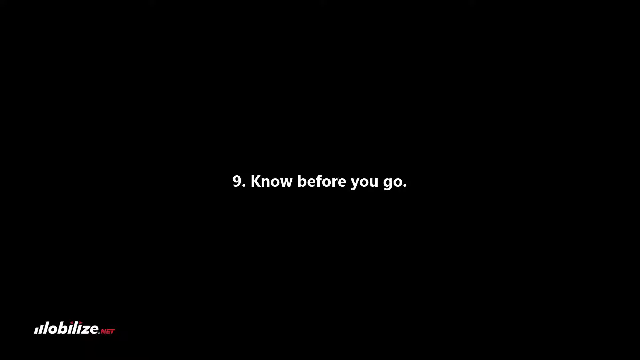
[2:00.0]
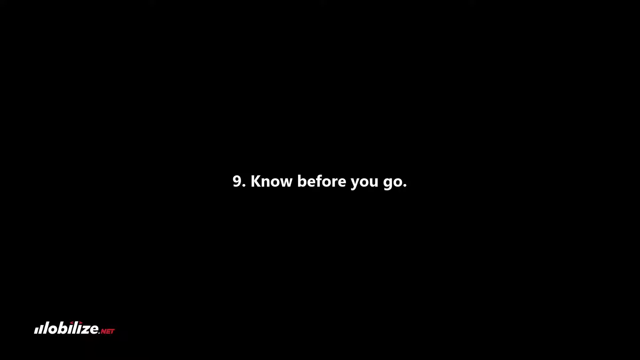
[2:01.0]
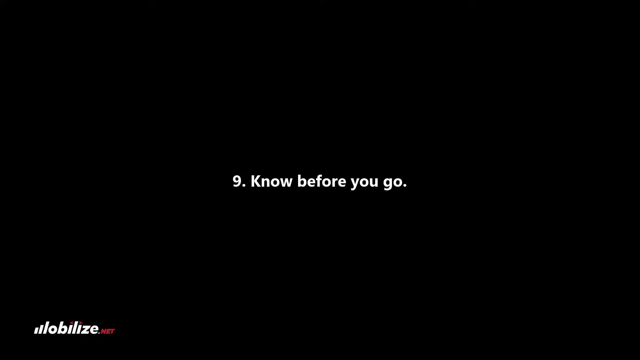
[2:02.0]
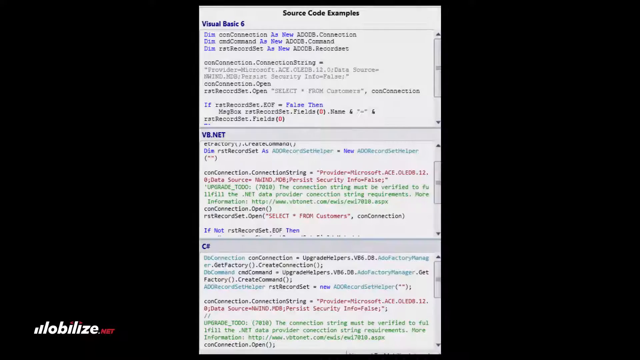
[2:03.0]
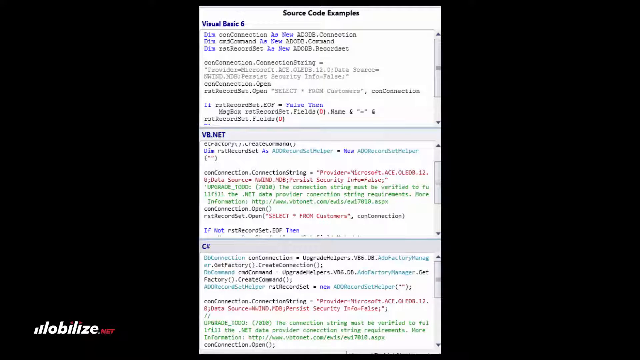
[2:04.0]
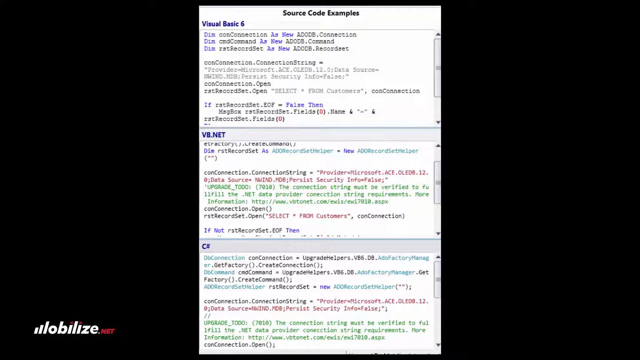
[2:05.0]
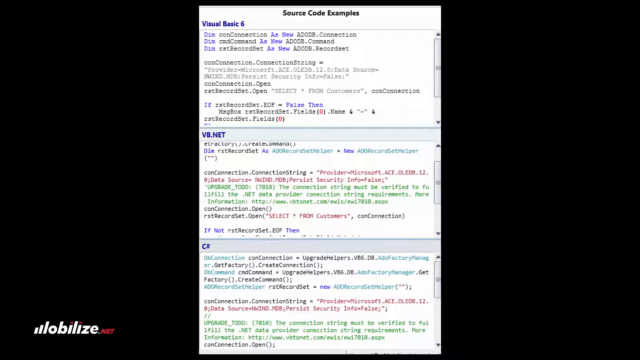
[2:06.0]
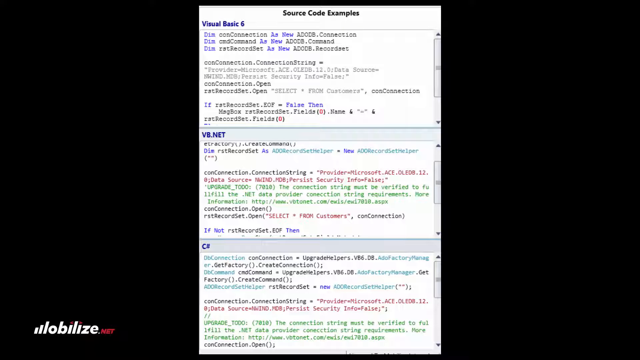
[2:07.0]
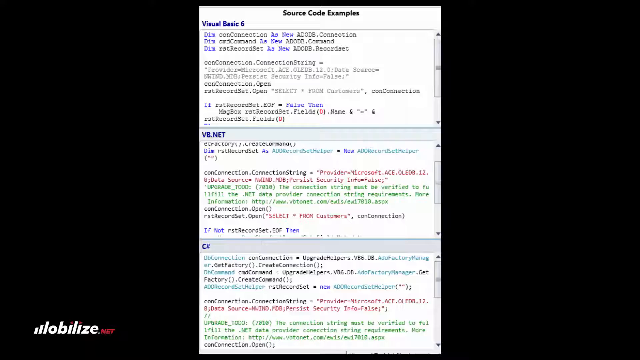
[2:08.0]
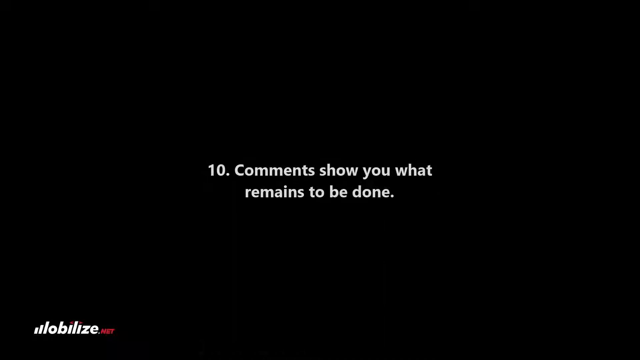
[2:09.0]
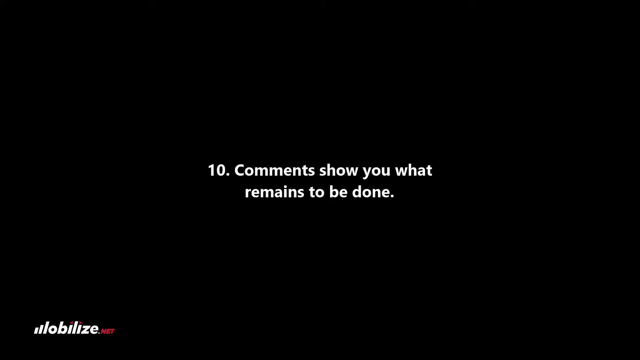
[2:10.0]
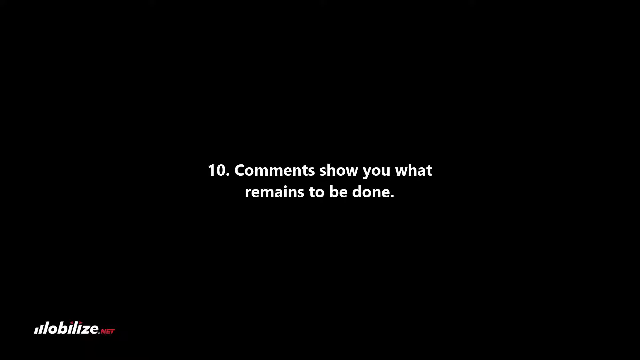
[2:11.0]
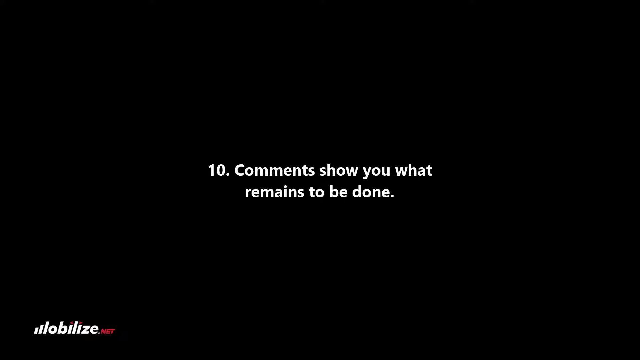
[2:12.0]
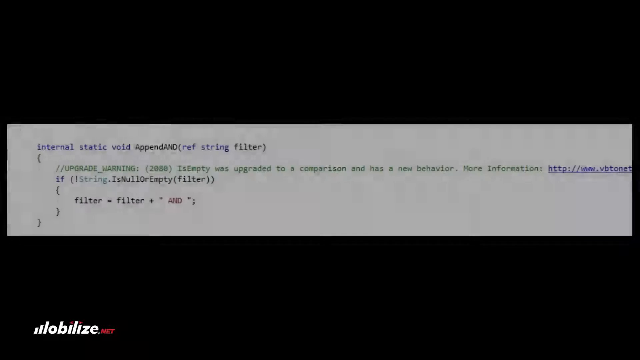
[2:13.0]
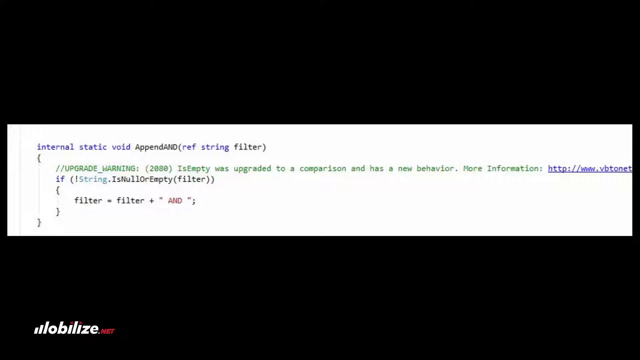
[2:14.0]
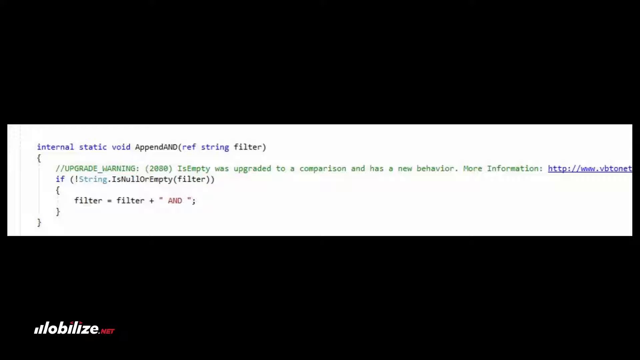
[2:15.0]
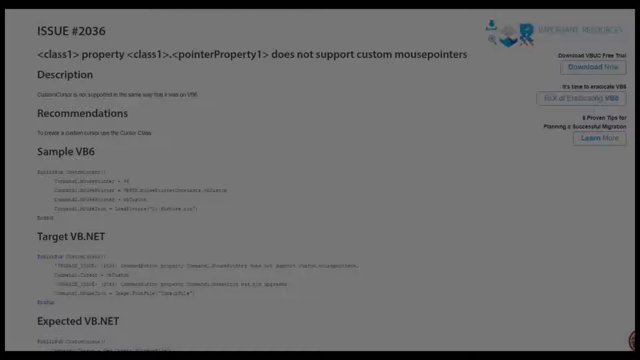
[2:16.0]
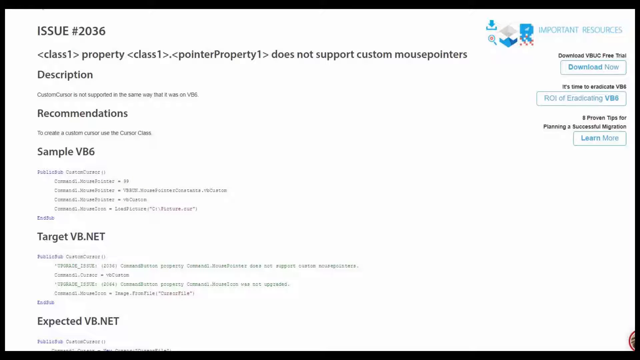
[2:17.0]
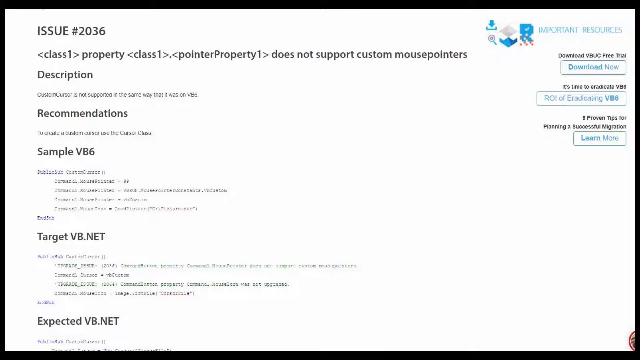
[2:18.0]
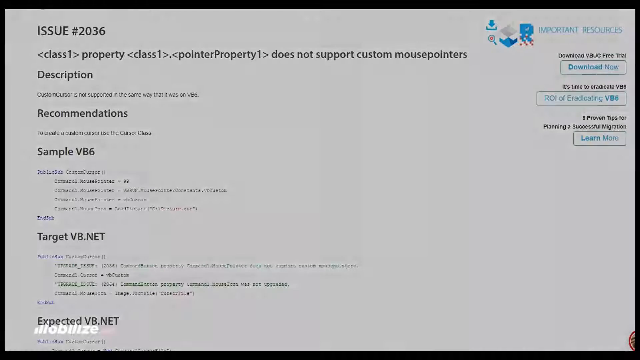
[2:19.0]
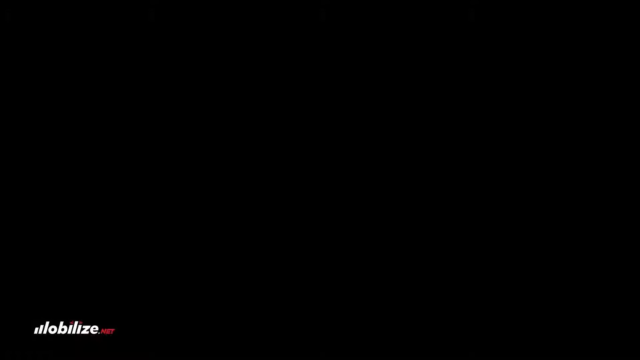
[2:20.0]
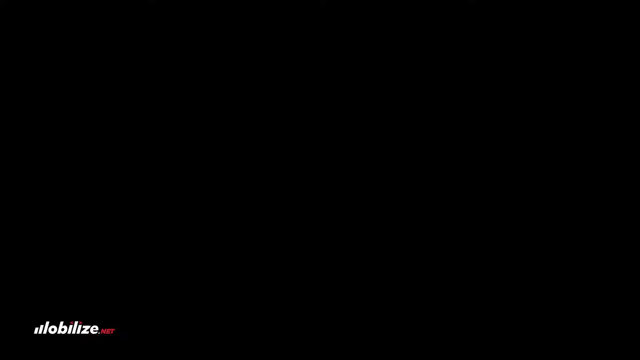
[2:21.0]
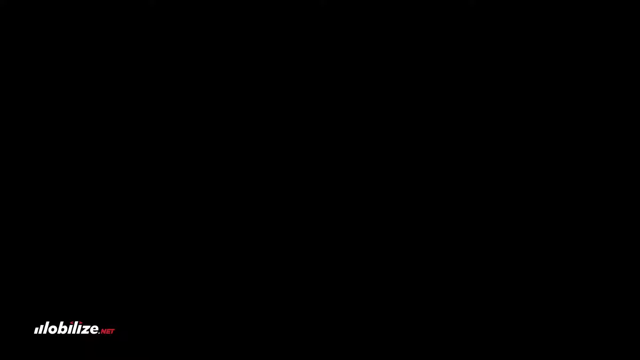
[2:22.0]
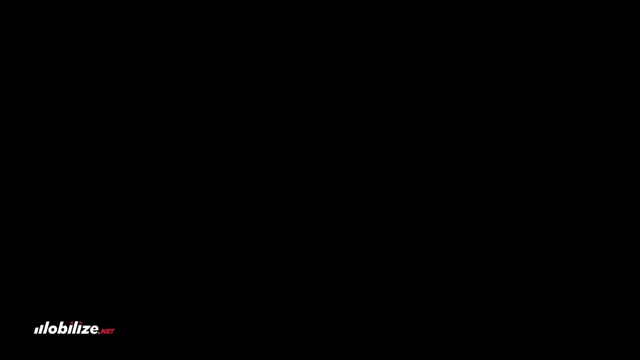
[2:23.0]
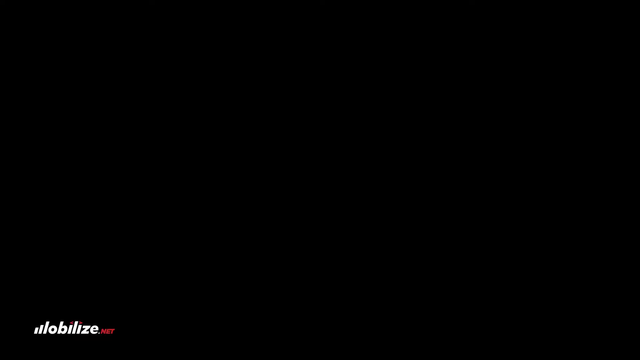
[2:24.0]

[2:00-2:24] The black screen shows the number 9 text, "Know Before You Go," in white Arial font in the center, for a few moments before fading to black. Another image fades in, apparently labeled "Source Code Examples Visual Basic 6," with Visual Basic 6 code in the top box, VB.NET code in the second box, and C# code in the bottom box. It stays for a few moments, then fades back to the black screen, where white Arial text in the center reads "10. Comments show what remains to be done." This holds for a few moments and fades to black before another image of code fades in, which appears to be cut off on its right-hand side. It fades out, and another image of code fades in, labeled "Issue Number 2036," showing issues in the code, with a description, recommendations, and then the sample and target for the code. This image holds for a few moments and fades out to the black screen.